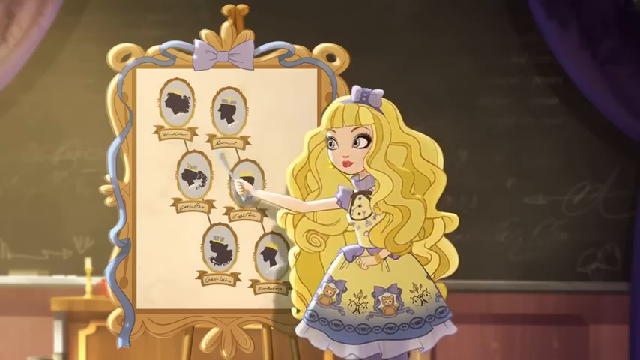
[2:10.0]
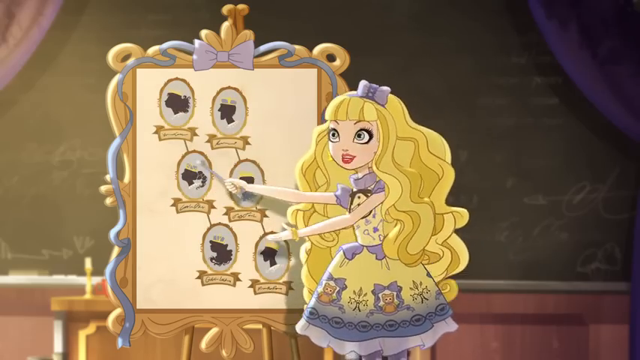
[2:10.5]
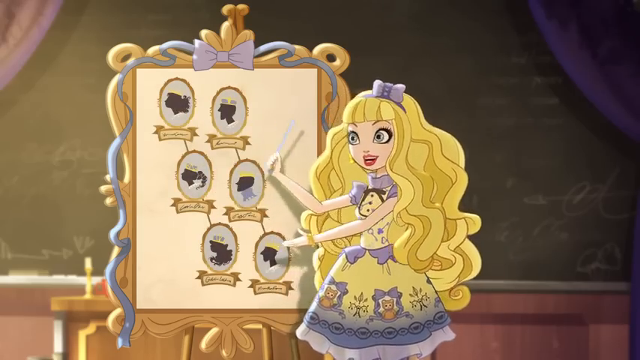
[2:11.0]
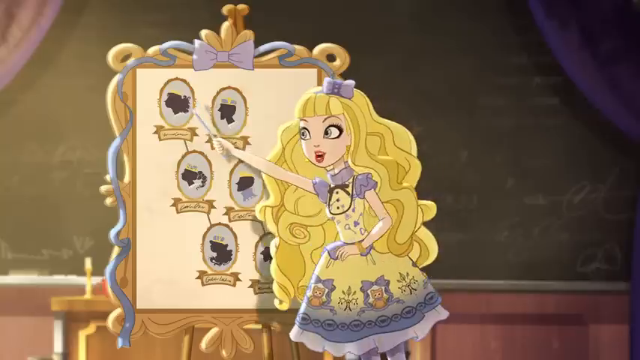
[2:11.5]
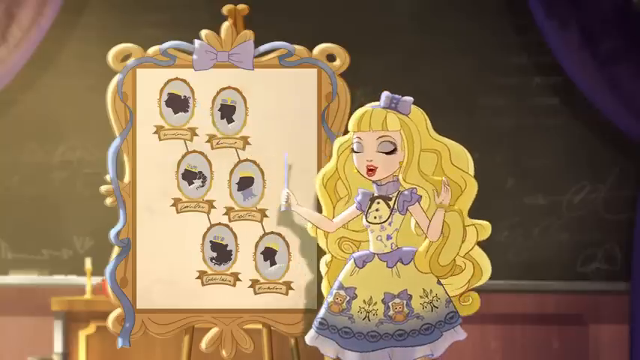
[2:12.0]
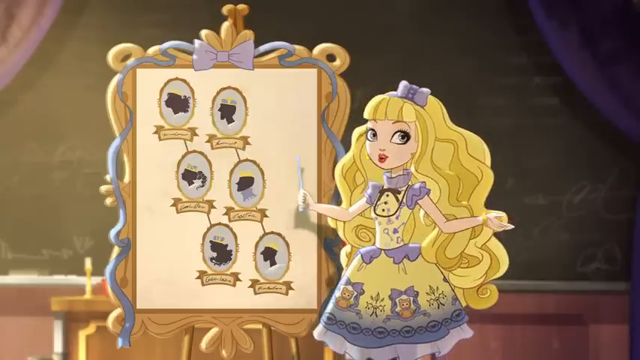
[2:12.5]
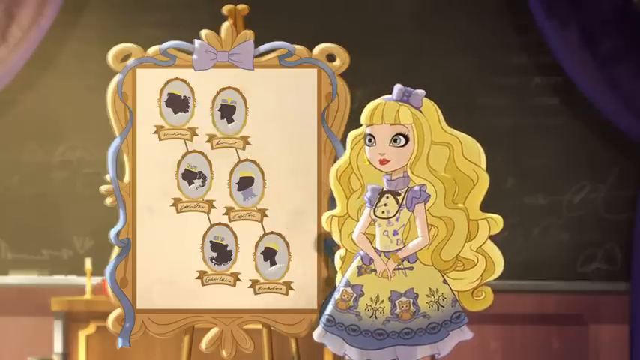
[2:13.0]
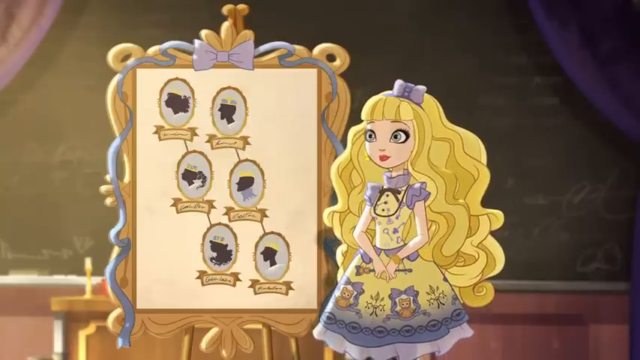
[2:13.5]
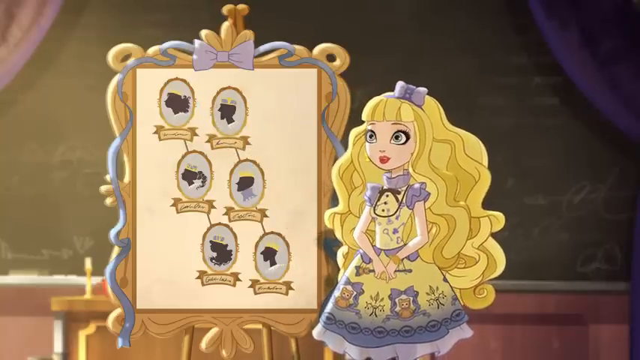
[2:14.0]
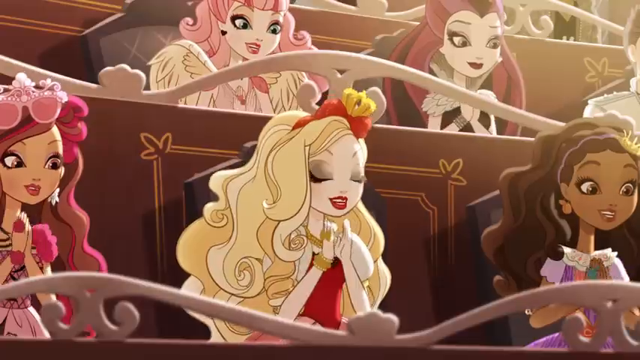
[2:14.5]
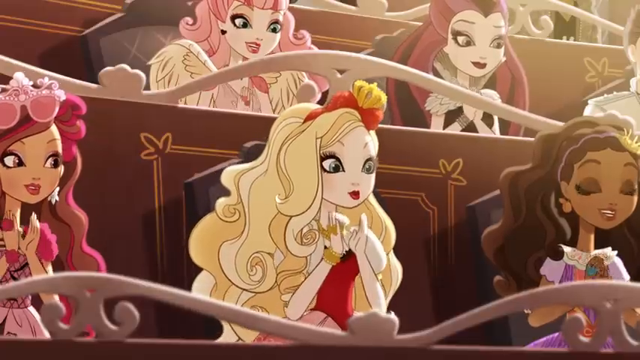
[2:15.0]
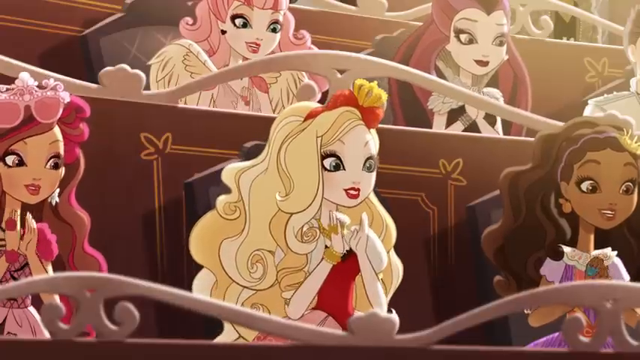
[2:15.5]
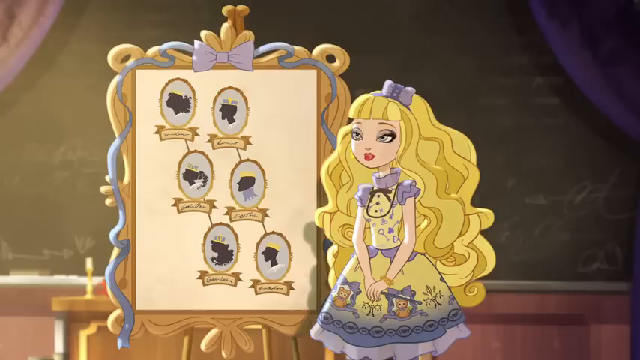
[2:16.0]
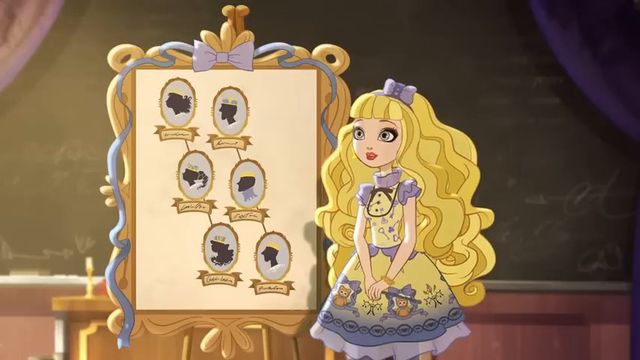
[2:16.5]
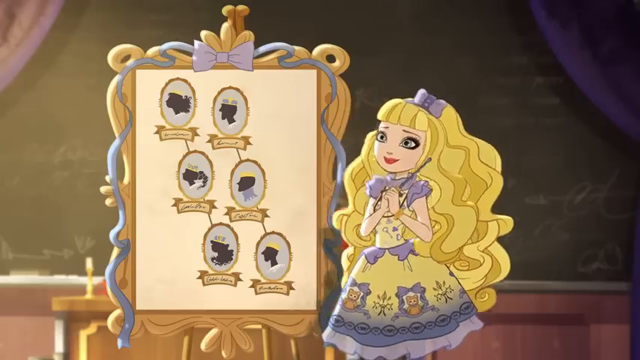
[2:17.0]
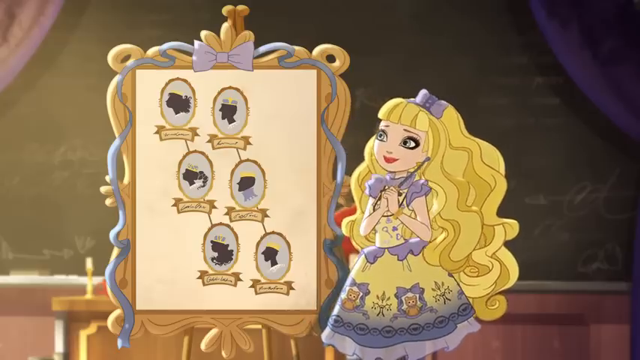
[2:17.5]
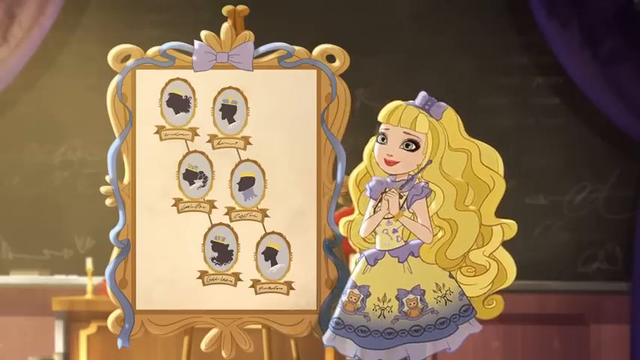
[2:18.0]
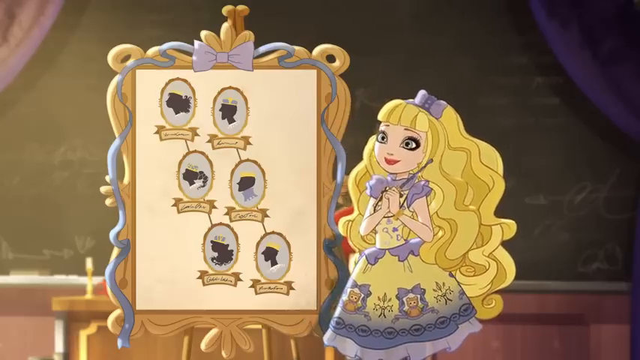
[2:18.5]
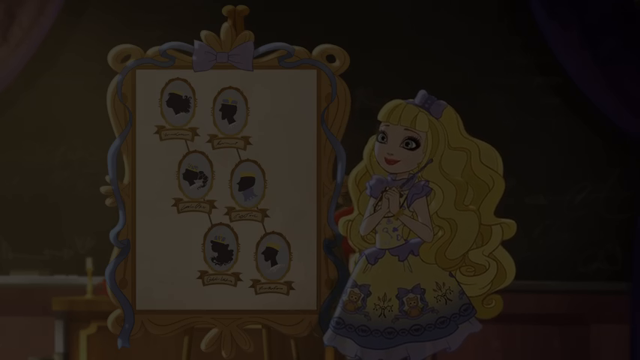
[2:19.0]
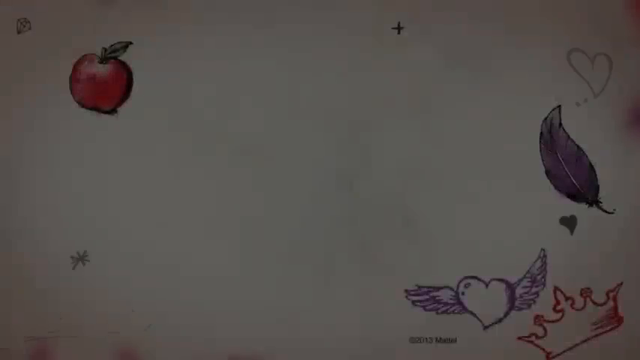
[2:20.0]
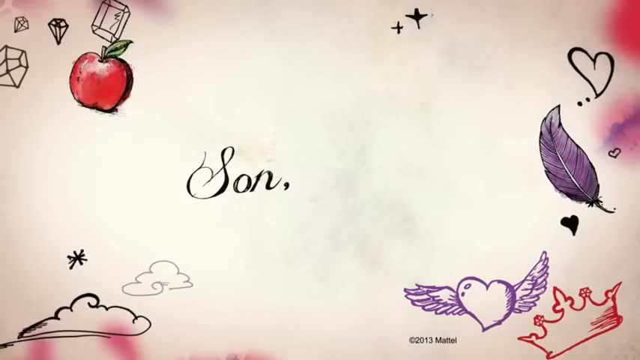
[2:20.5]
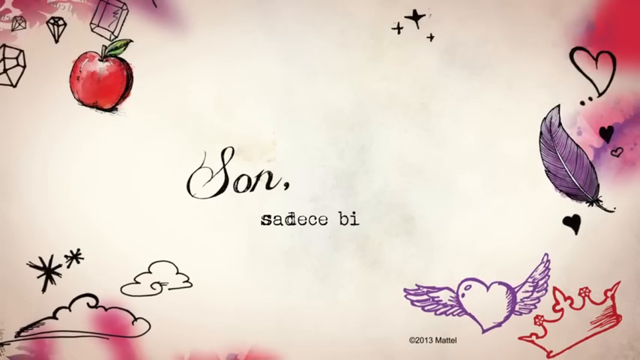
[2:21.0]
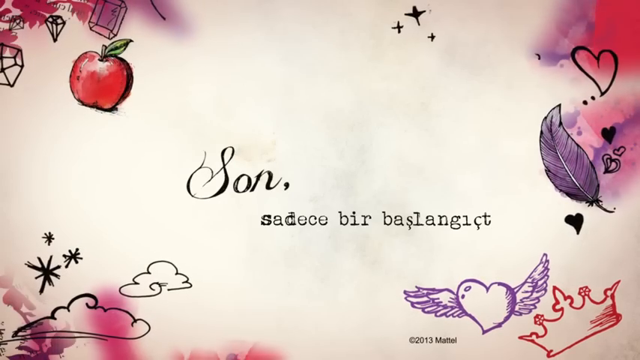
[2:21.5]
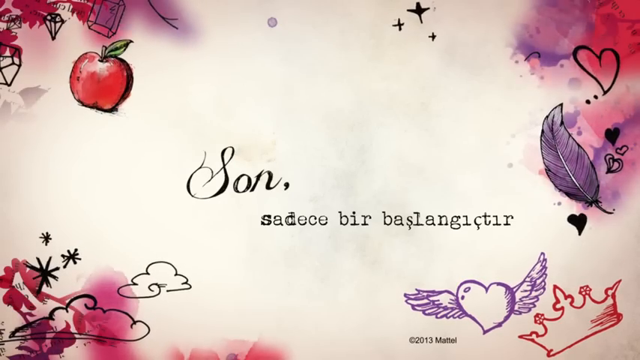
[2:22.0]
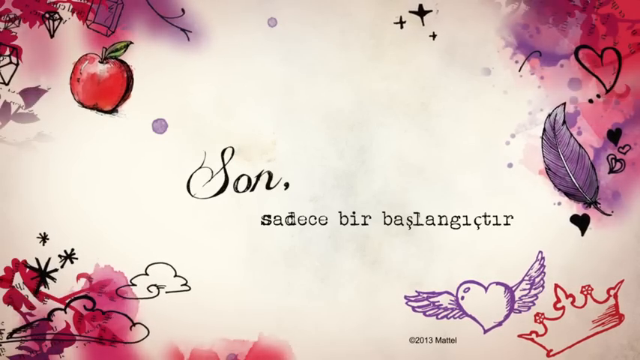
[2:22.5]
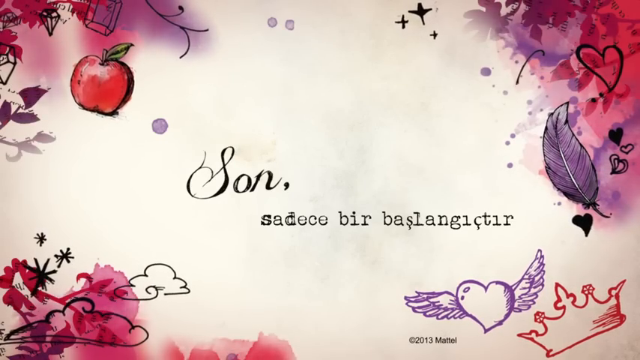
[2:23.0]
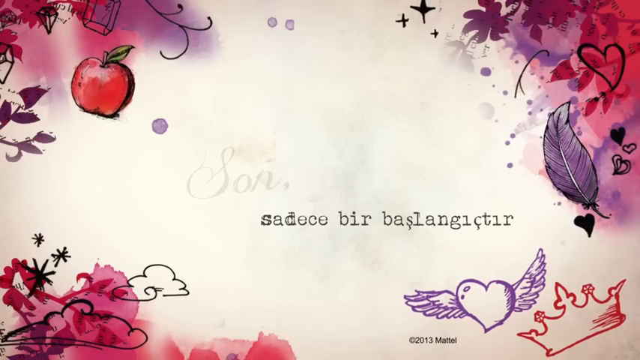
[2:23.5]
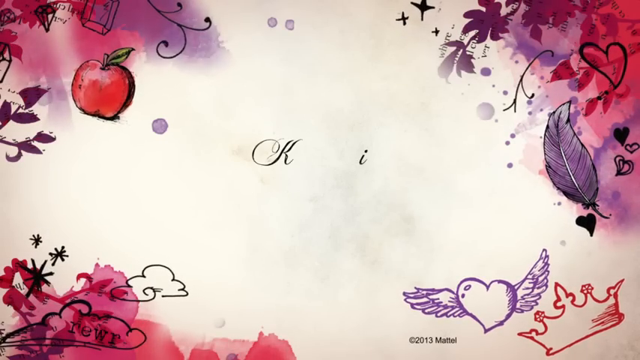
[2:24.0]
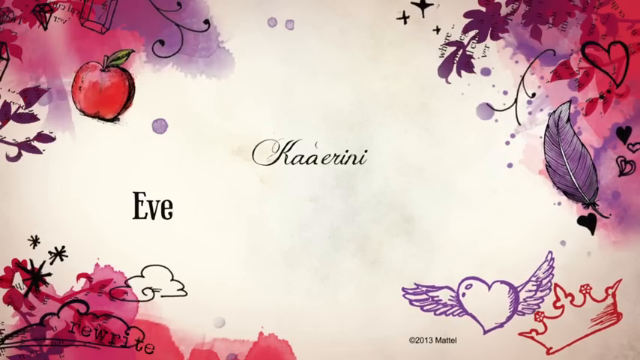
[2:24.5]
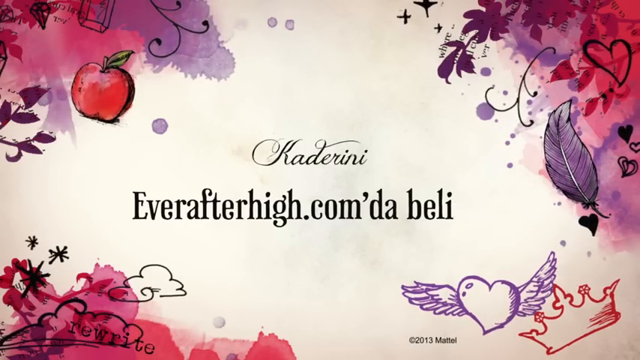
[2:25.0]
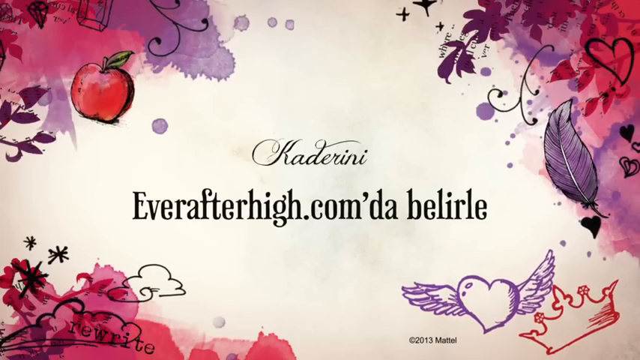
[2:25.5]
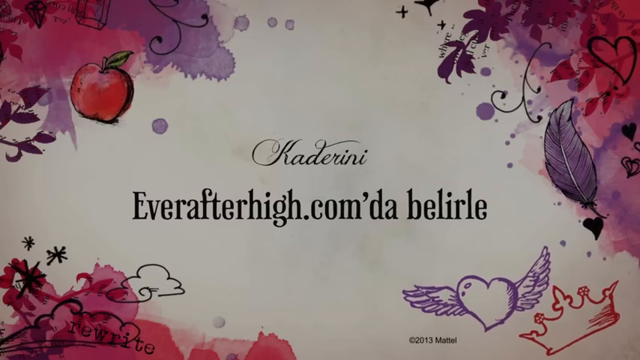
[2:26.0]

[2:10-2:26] Goldilocks, in her dress with bears on it and with extremely long hair, is extremely excited as she describes her family, and her friend is extremely happy that she got through it without crying. The credits then roll. The end credit scene has an apple with doodles on the left, what look like gems in the top left corner, and little stars in the top middle, closer to the right. There is a heart on the right side, a purple feather, another colored-in heart, an empty heart, and another colored-in heart. A purple heart with wings is at the bottom, with a red crown beside it in the bottom-right corner, and there are cloud doodles. Flowery accents start making their way in with tiny splashes of watercolor.